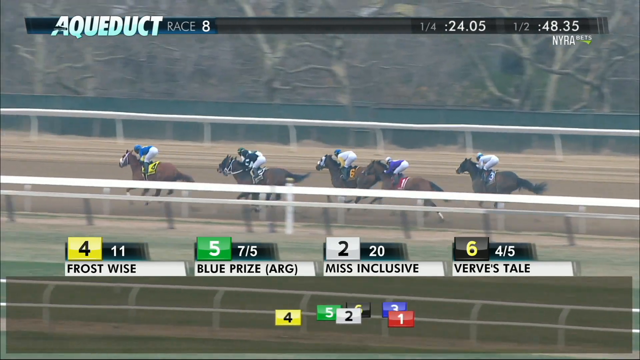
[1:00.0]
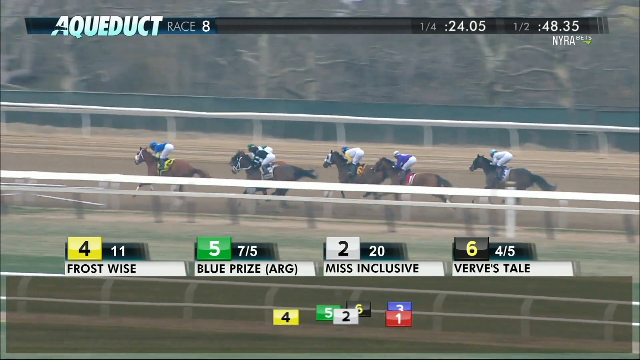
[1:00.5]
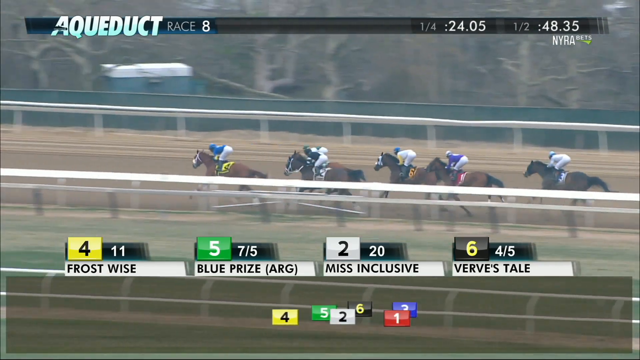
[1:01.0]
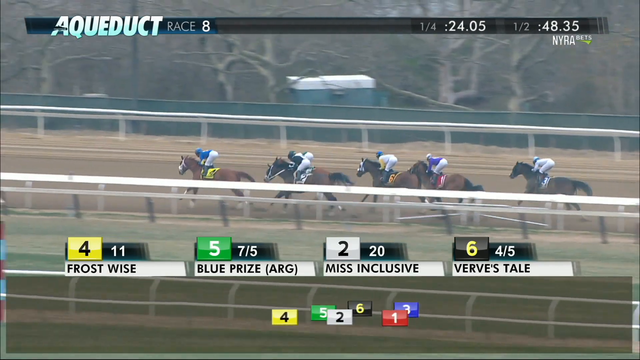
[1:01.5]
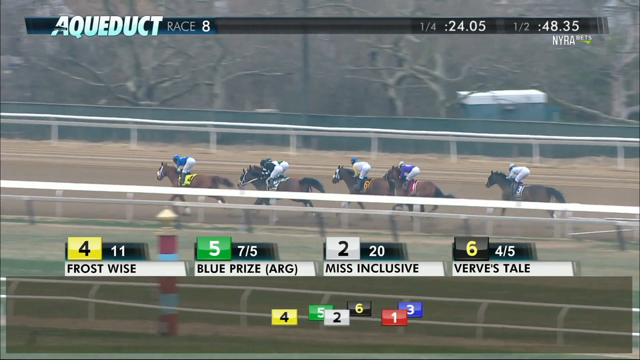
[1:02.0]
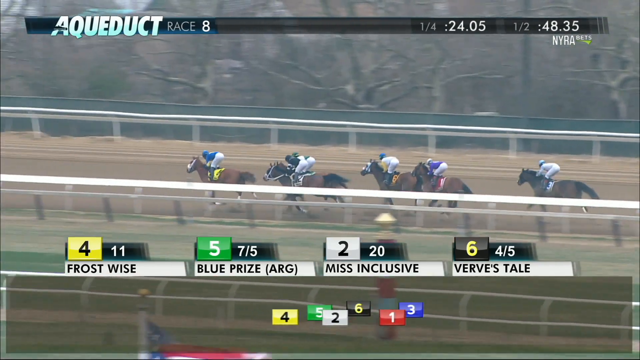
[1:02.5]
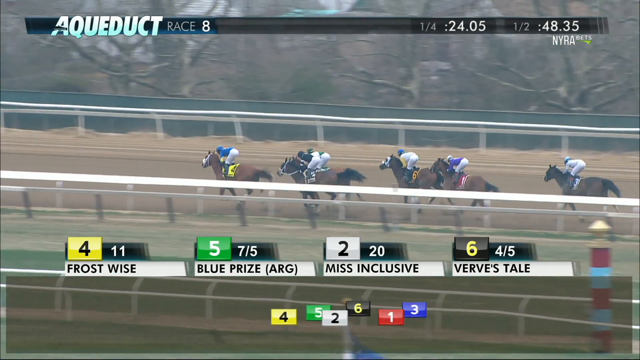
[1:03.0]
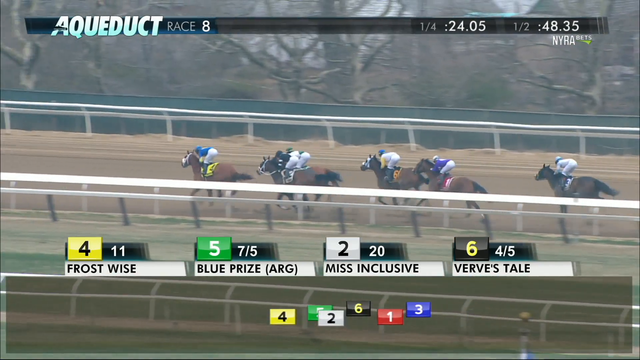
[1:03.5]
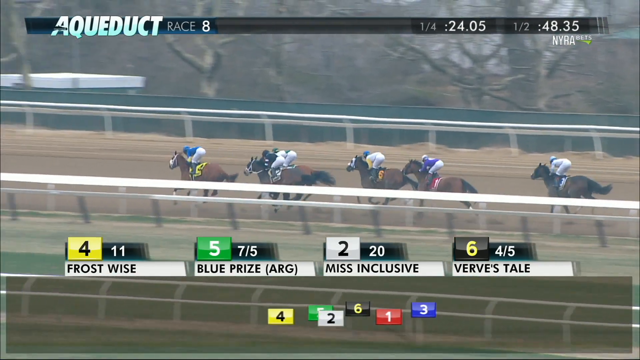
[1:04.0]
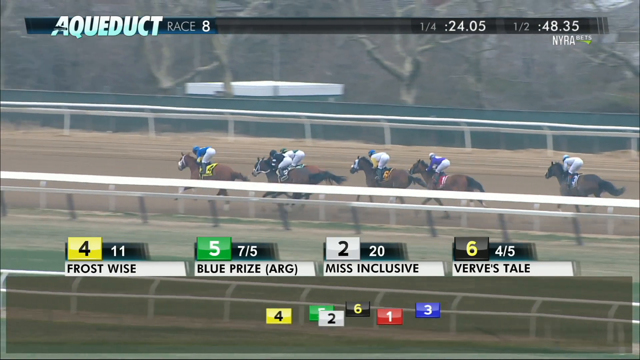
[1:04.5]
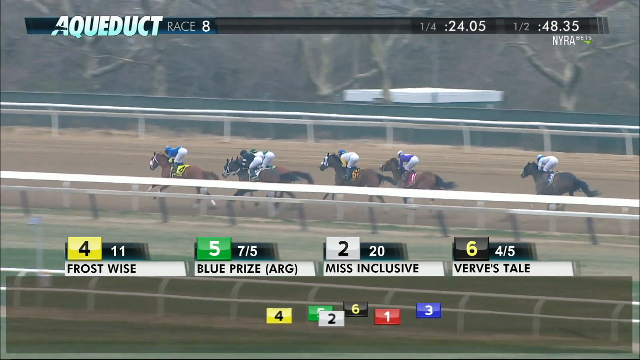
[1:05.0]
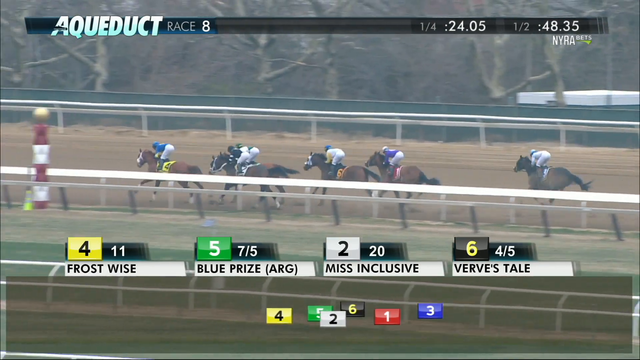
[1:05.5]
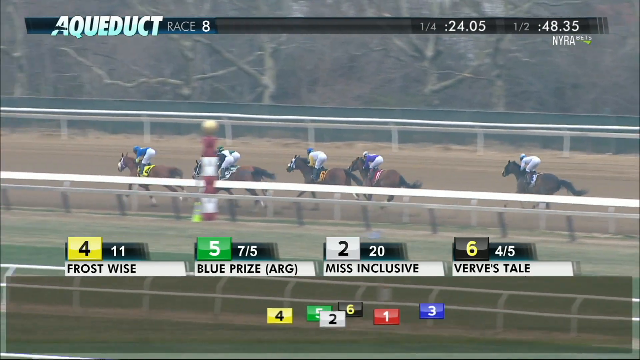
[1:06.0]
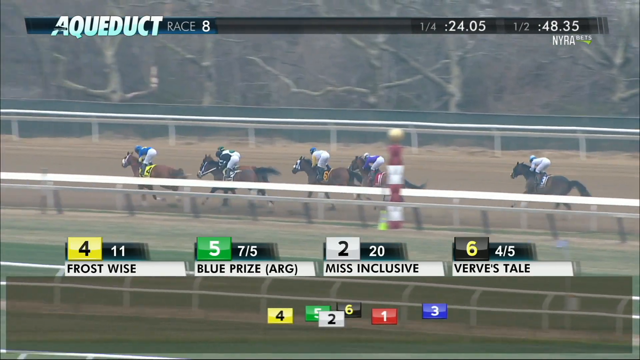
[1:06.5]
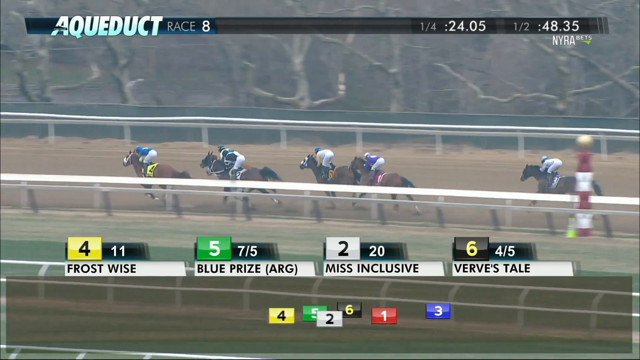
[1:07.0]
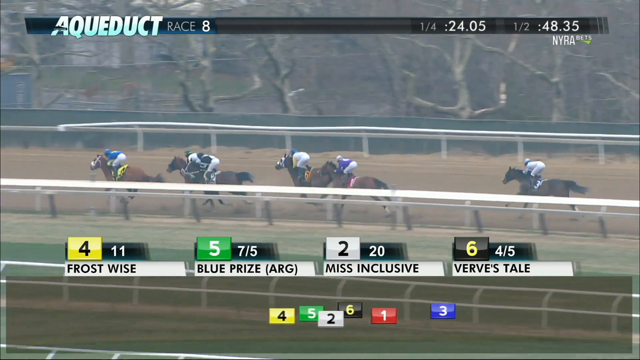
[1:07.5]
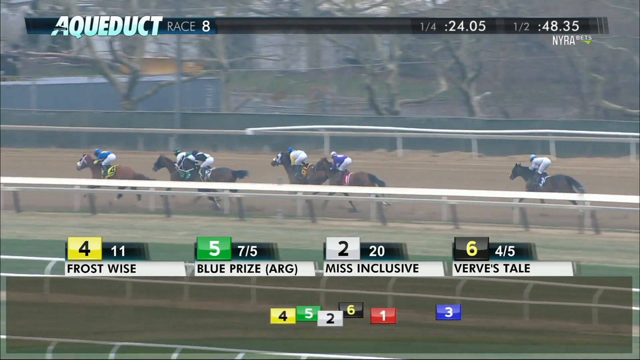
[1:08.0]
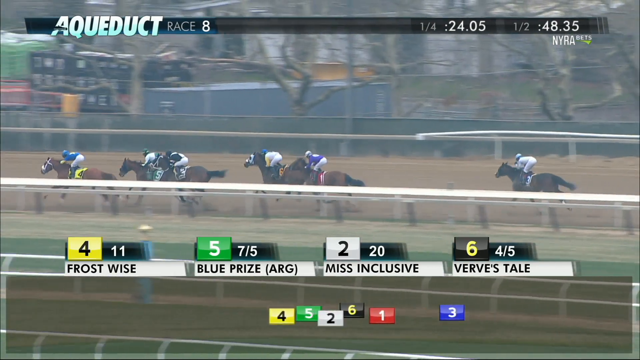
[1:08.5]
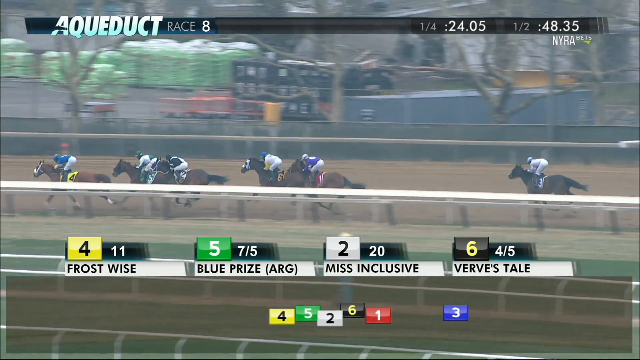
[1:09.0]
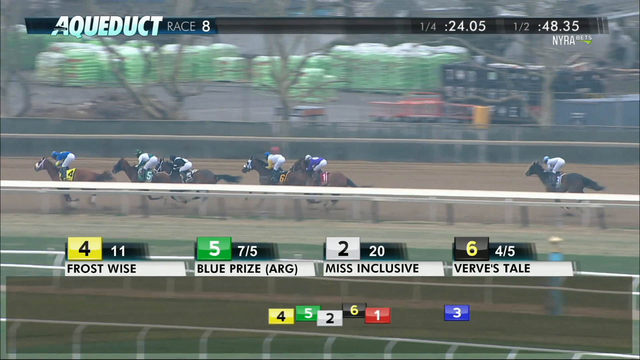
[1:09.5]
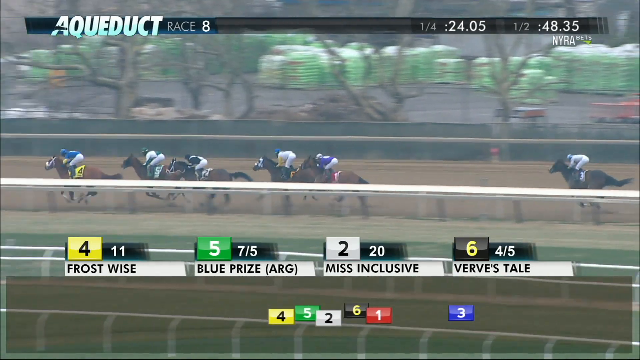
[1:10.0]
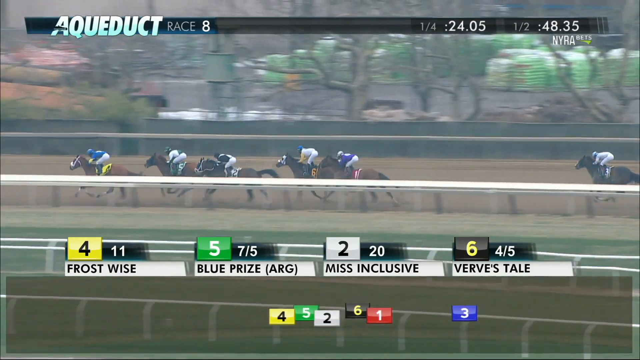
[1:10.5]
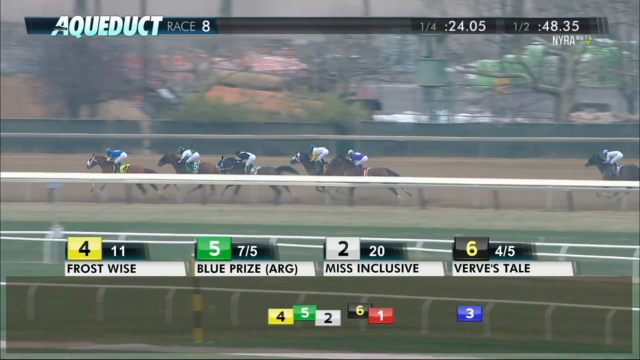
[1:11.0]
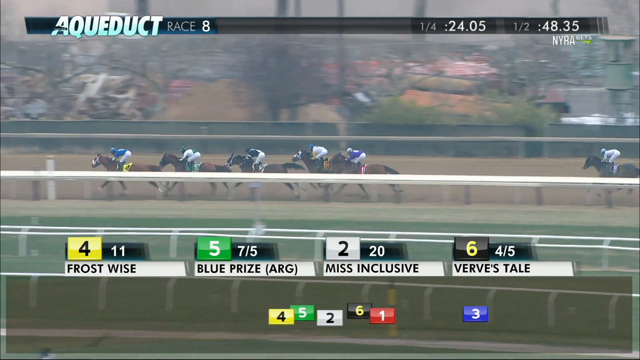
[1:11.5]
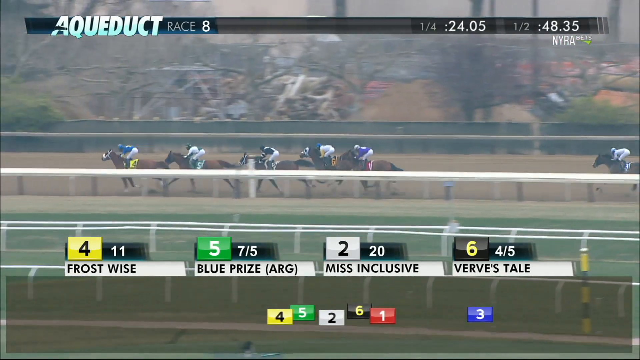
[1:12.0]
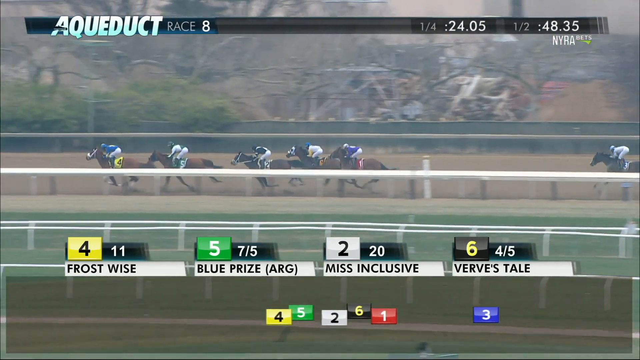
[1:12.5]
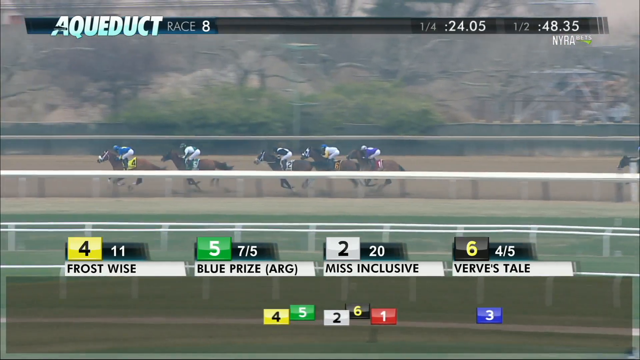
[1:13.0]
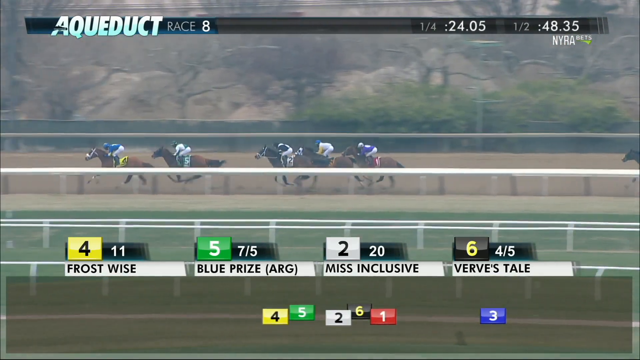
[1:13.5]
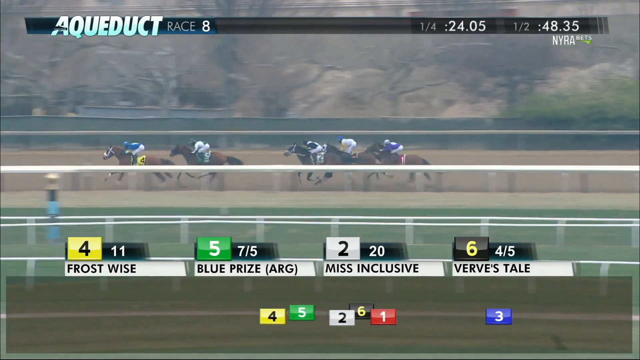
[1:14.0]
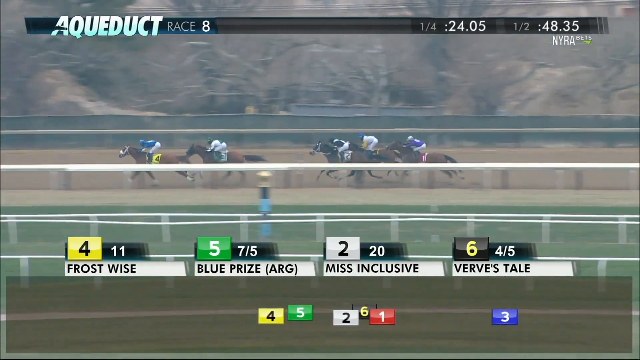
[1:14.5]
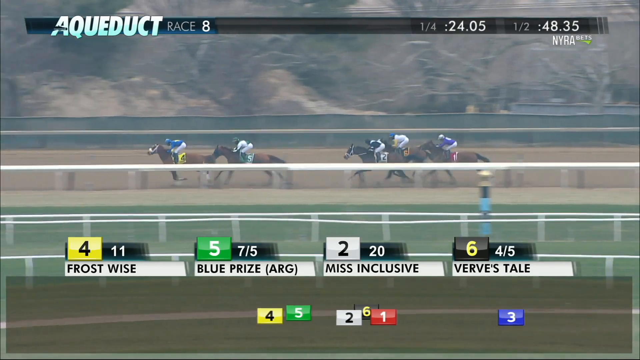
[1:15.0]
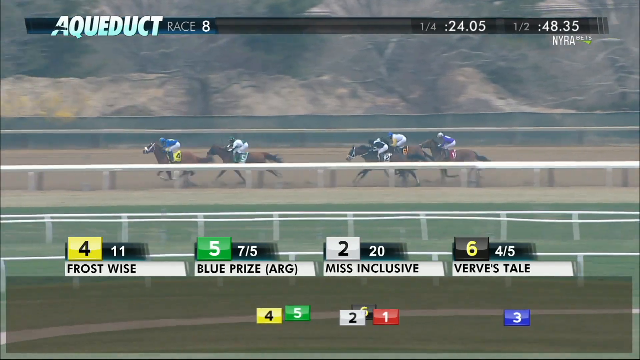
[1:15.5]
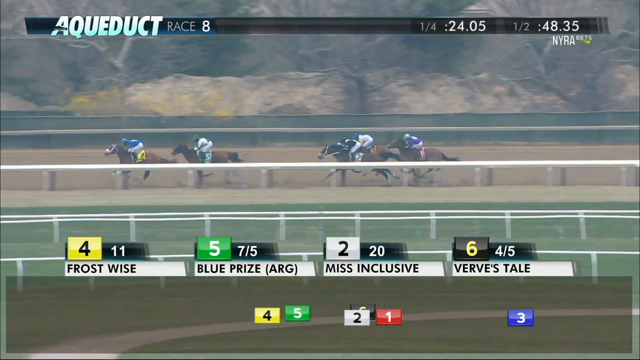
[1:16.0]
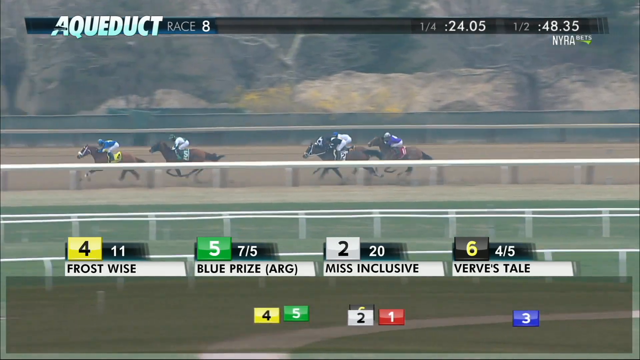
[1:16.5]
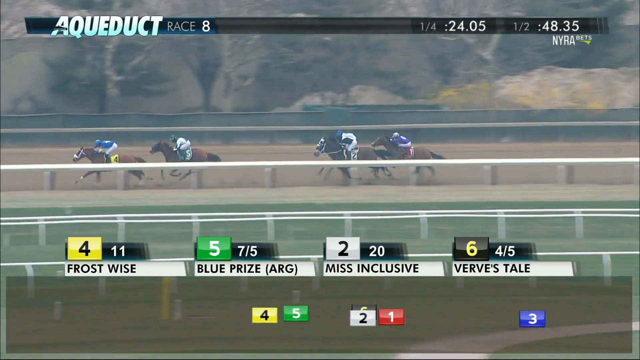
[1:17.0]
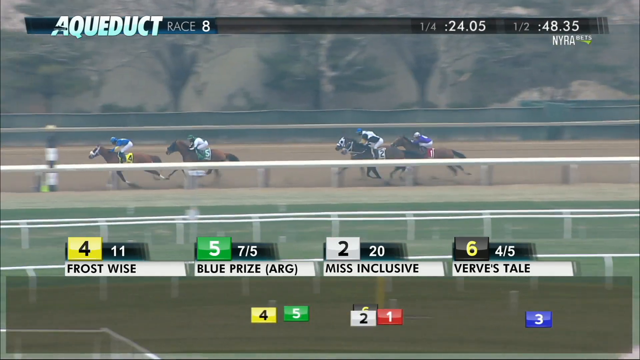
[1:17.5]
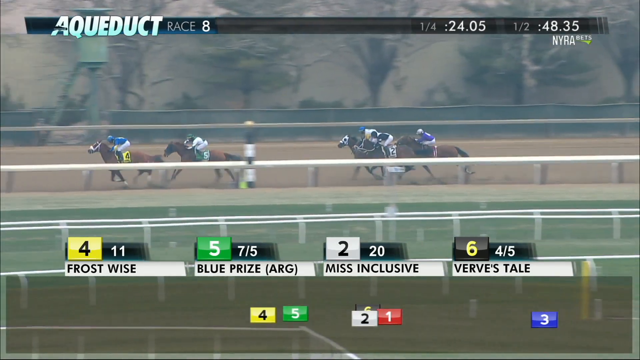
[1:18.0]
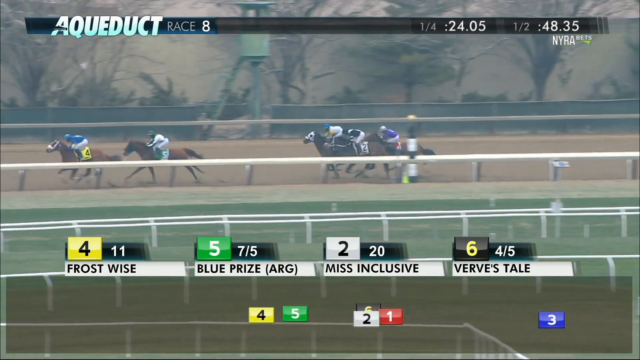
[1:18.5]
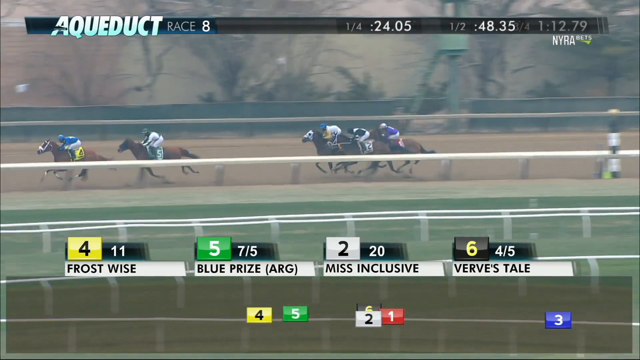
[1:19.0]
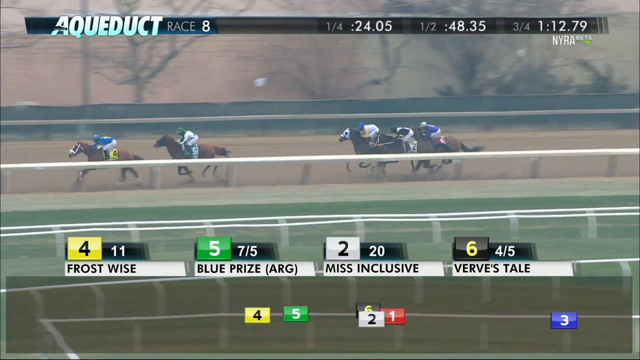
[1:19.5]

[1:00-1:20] The race continues. Frost Wise is clearly in first, Blue Prize clearly in second, Miss Congeniality in third, and Versus Tail back in fourth. The top of the screen shows the leader's split times, with the half mile at 48.35 seconds. The horses reach the end of the back straightaway and start to curve around again. One horse has fallen off quite a bit, leaving five horses in the main frame. The first two have separated, with a little gap between them and the group behind. A split then shows three quarters of a mile in 1:12.79 as they go around the back curve.